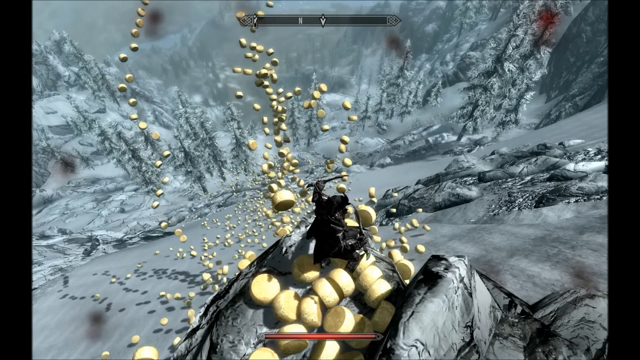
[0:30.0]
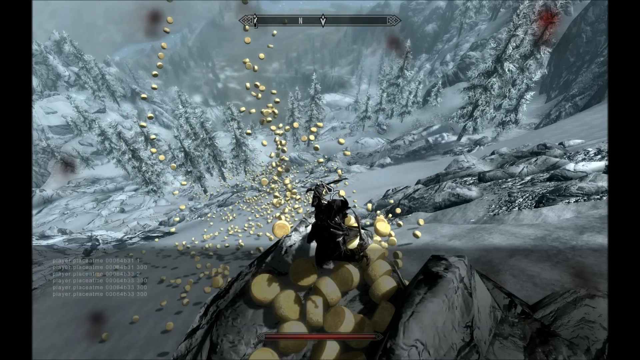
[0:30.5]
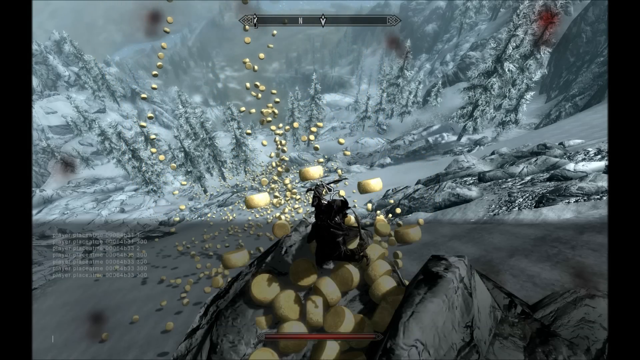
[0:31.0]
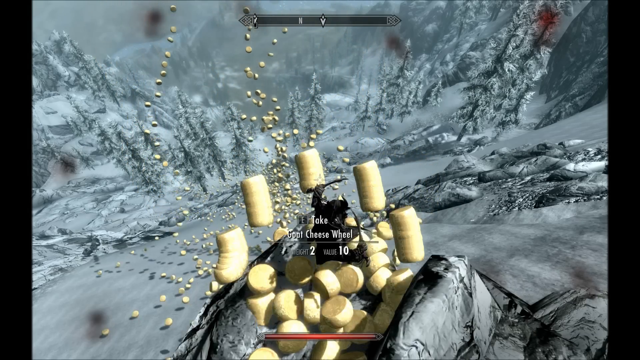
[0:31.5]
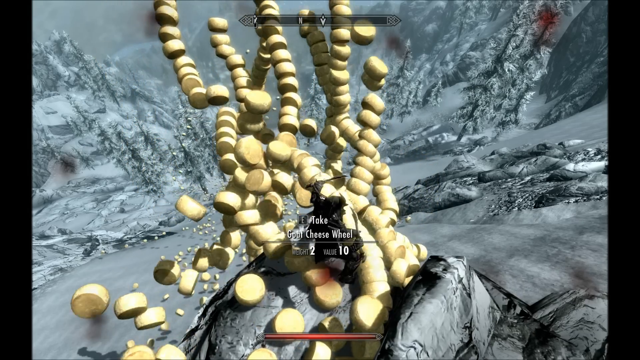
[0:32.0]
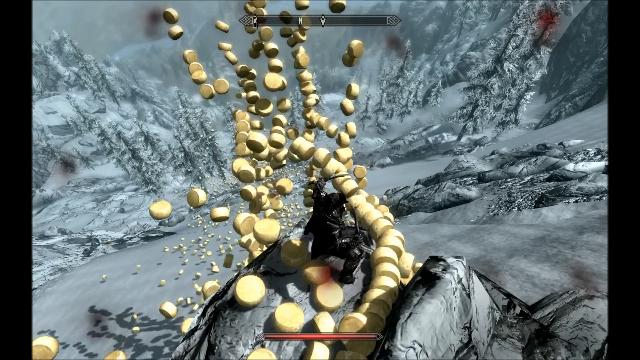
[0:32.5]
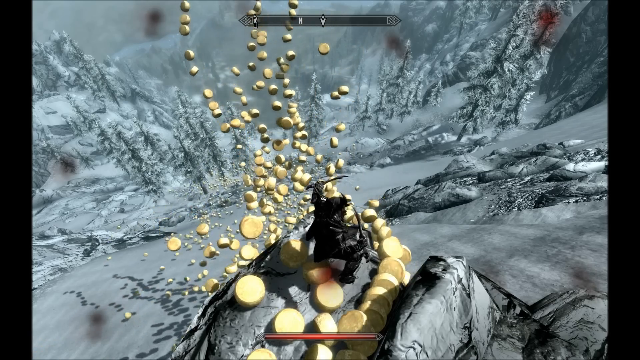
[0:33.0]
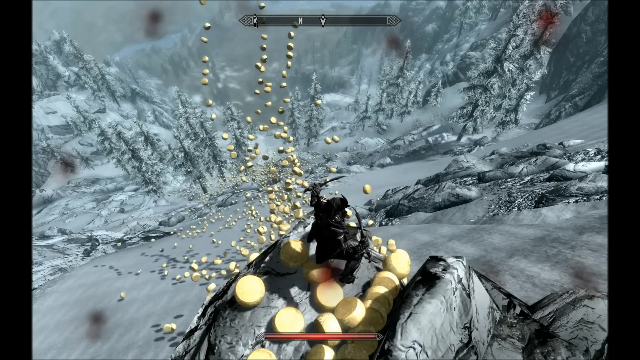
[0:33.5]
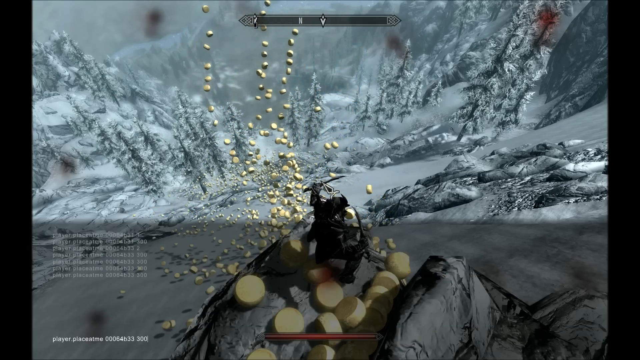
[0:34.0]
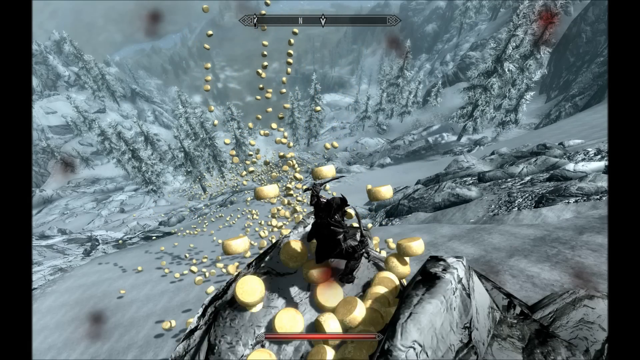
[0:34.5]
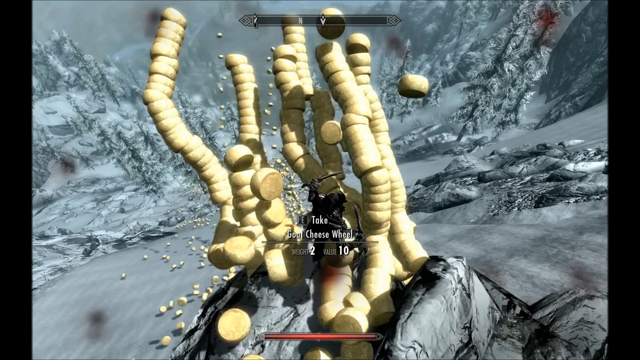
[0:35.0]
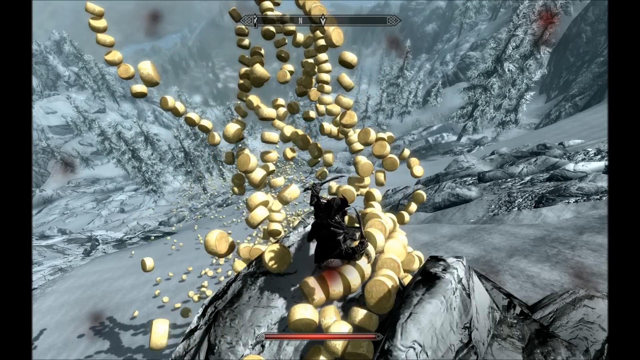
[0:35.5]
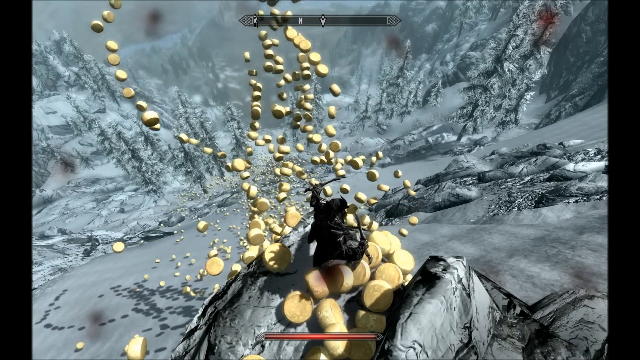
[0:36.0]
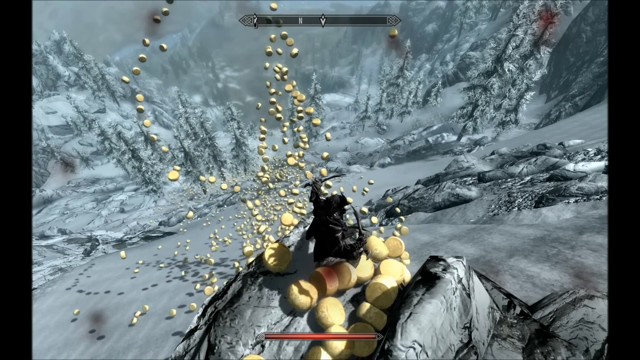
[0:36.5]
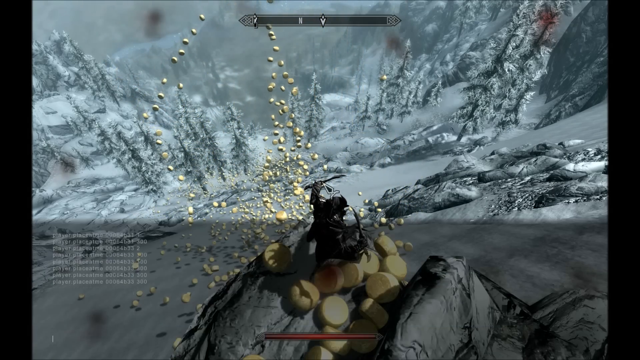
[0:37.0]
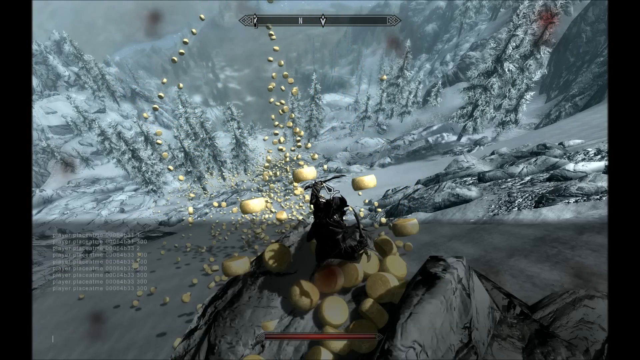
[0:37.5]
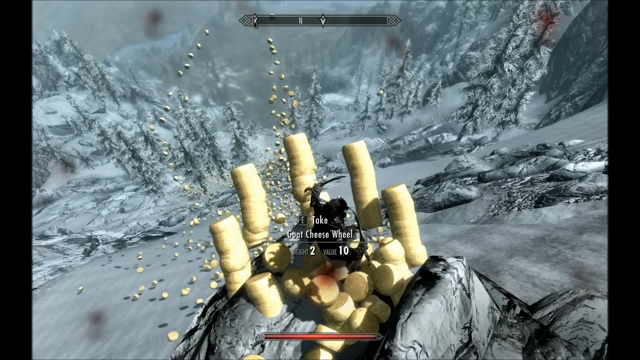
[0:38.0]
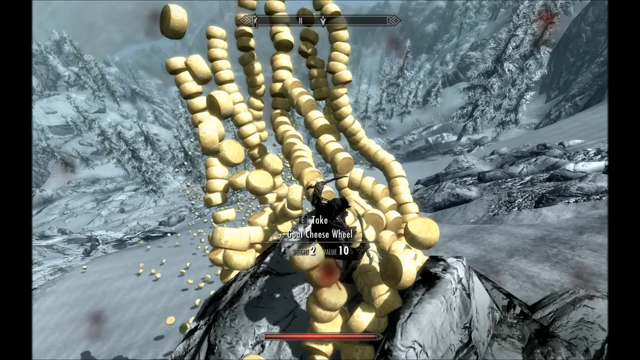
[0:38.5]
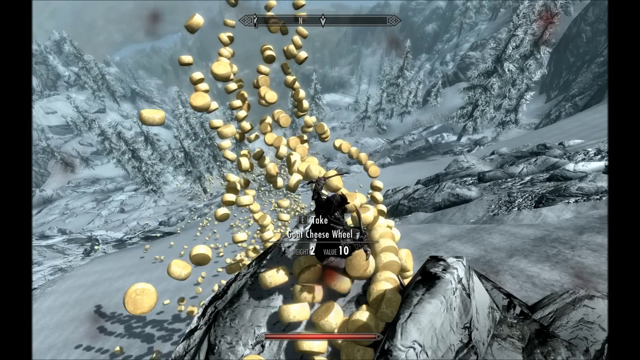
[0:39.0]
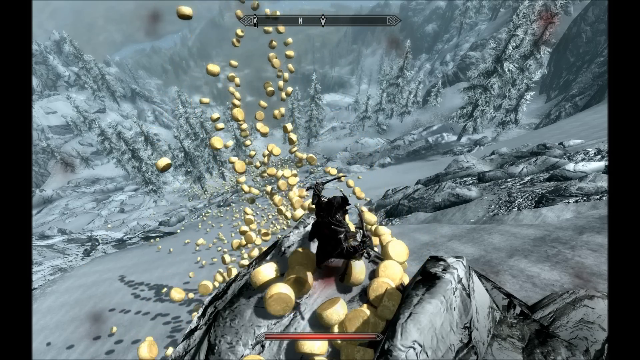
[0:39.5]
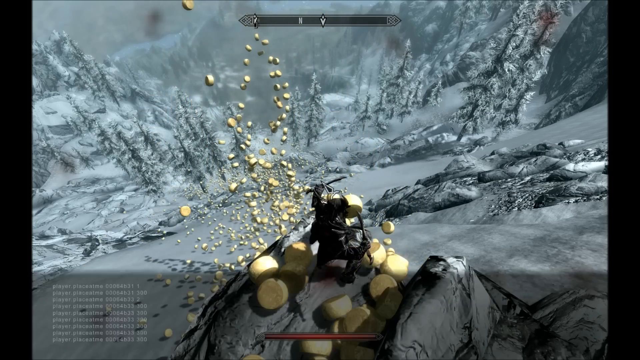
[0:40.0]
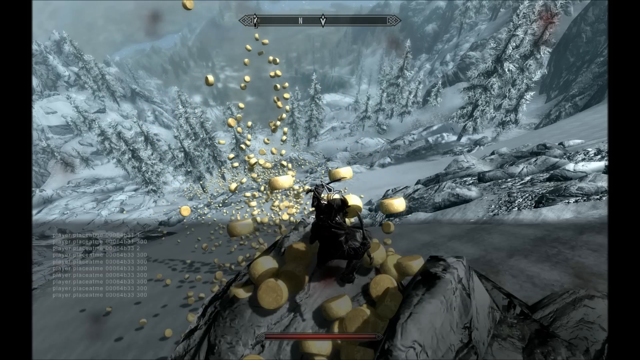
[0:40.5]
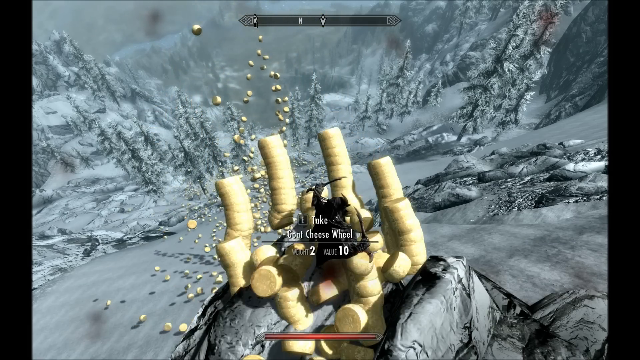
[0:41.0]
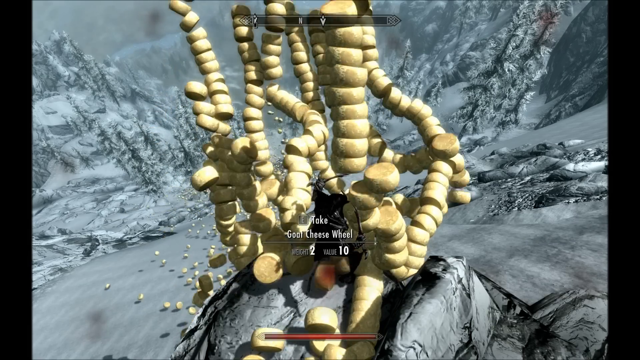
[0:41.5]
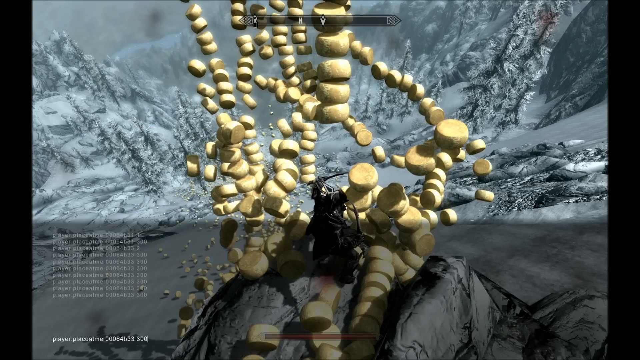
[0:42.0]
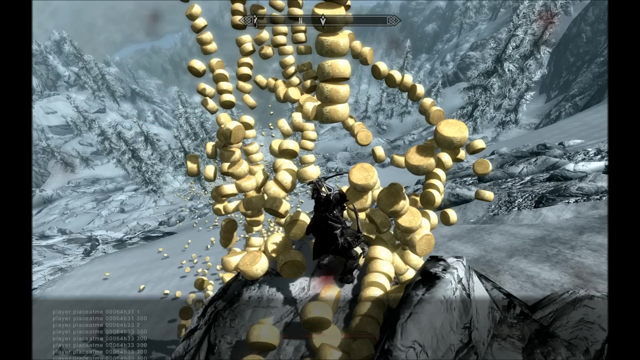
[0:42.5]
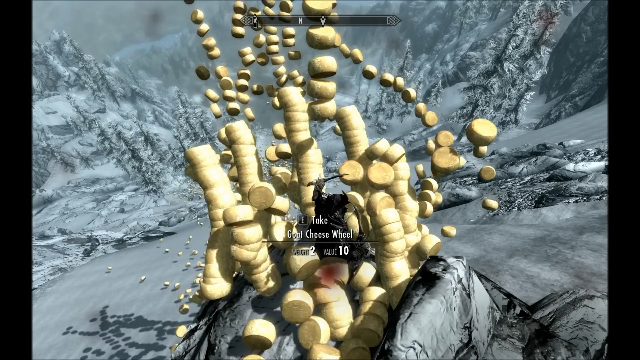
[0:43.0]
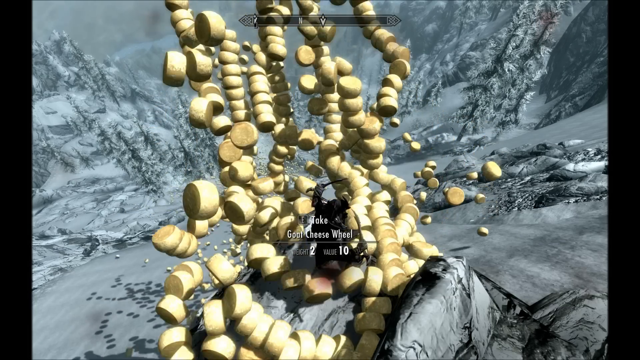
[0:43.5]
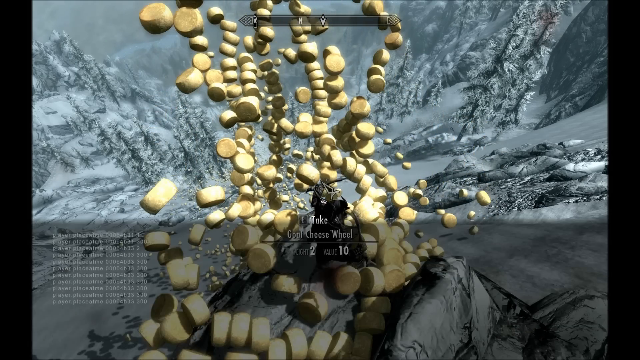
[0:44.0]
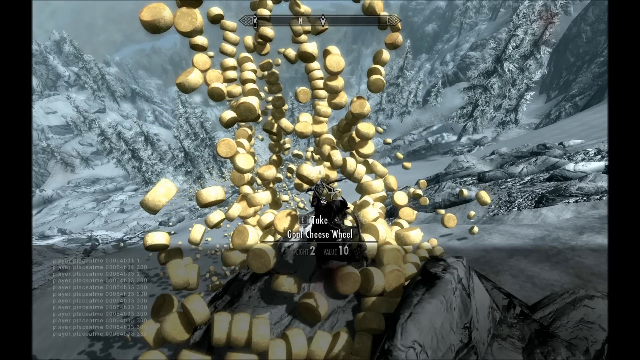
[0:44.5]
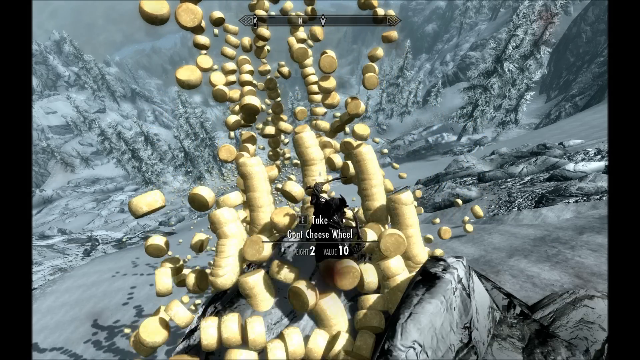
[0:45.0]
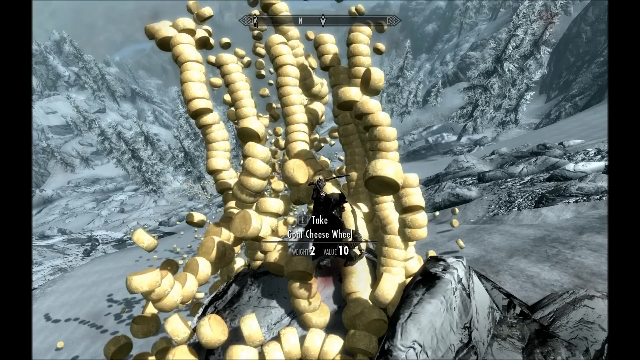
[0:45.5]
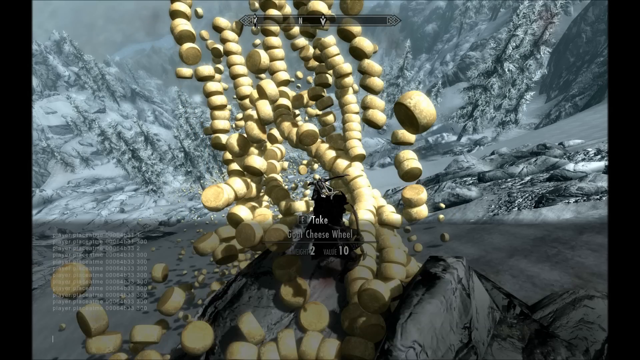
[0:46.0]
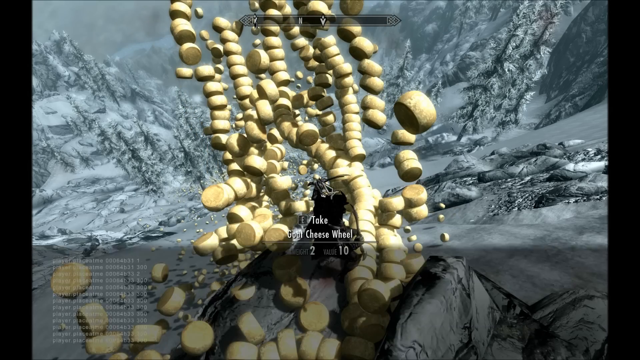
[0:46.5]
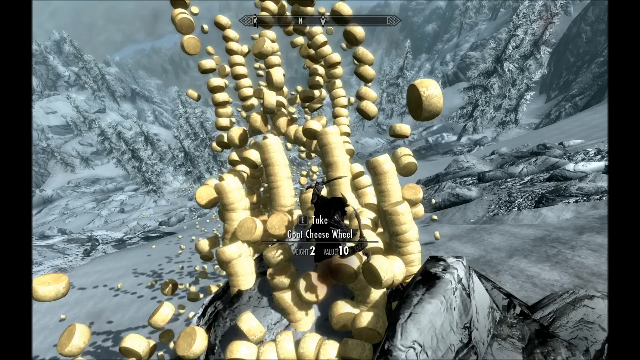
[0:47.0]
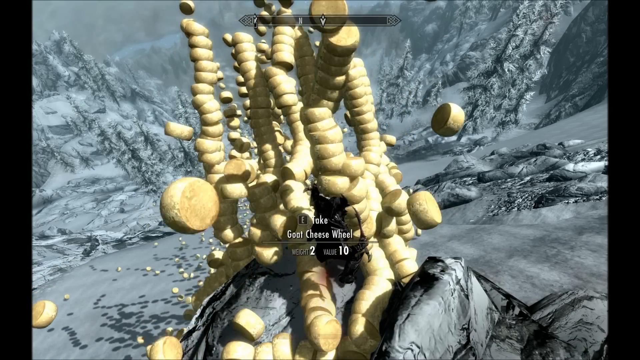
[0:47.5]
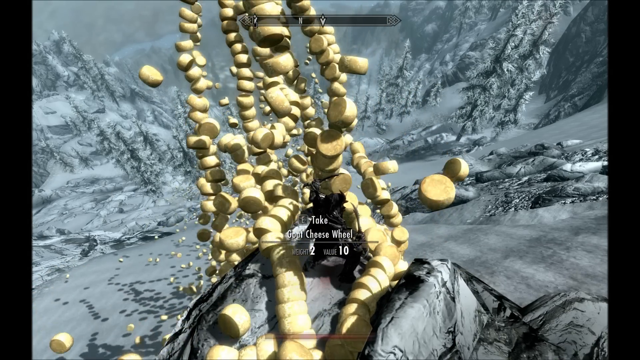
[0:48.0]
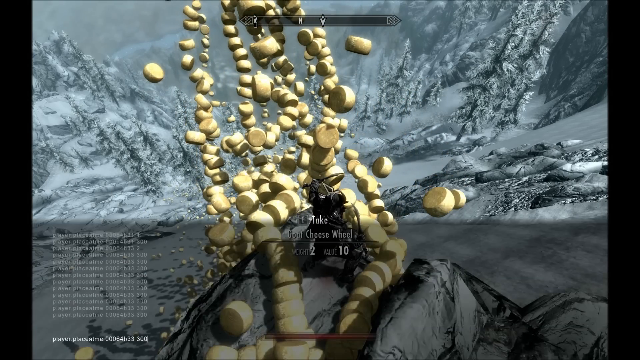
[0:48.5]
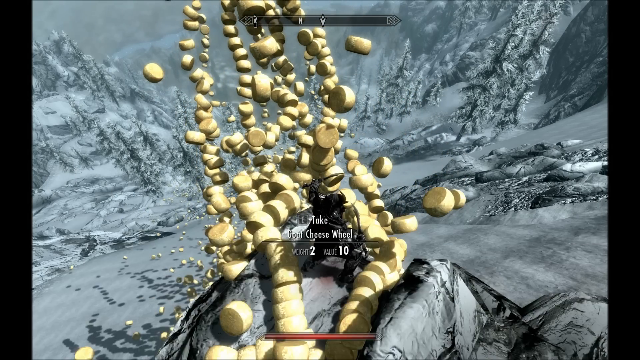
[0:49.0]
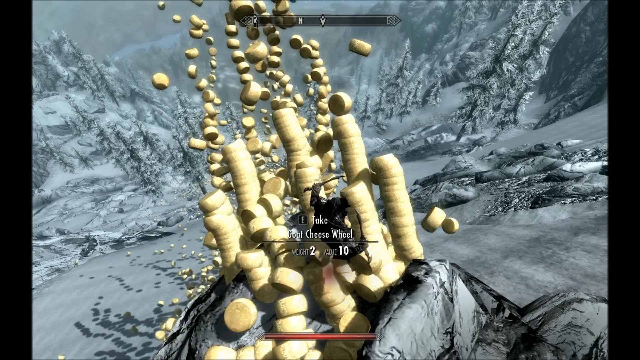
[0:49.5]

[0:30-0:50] A video game character stands on a boulder. Little yellow objects kind of come in from the top left toward the middle of the screen and circle the character. On the right-hand side the mountain kind of comes into view, with some small rocks down the mountain. Above the character, the game looks like it pauses or something happens, as a faded black section kind of pops up, and some writing appears on the lower left-hand side as the action takes place. The little yellow objects kind of spring up from the mountain the character is standing on, and the words "Cheese Wheel" appear to be visible.